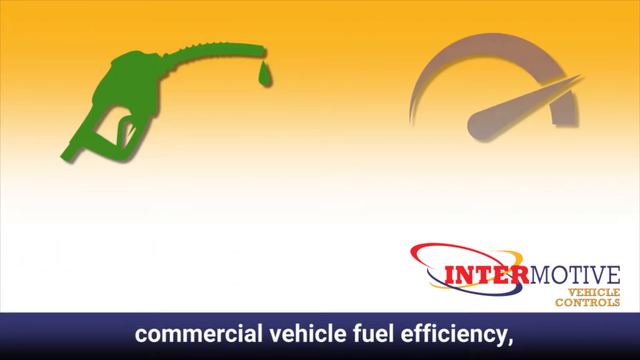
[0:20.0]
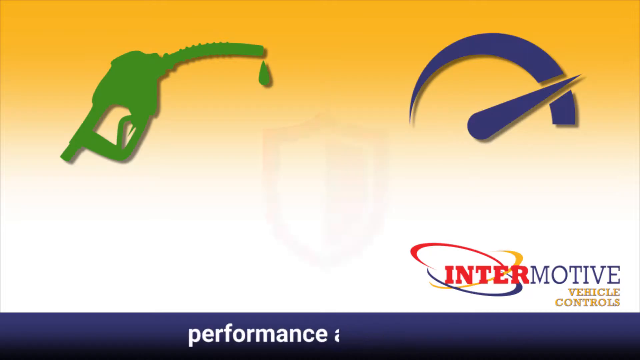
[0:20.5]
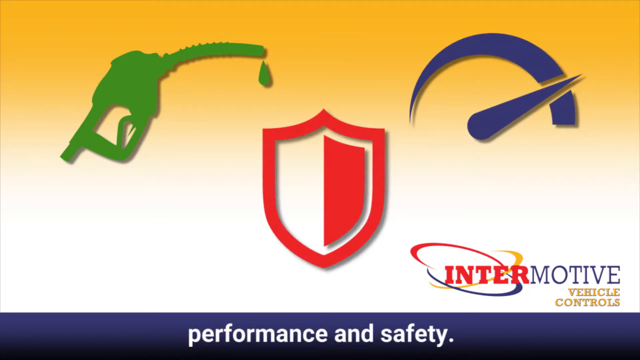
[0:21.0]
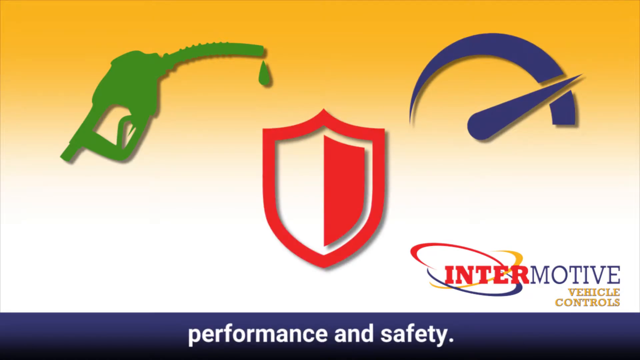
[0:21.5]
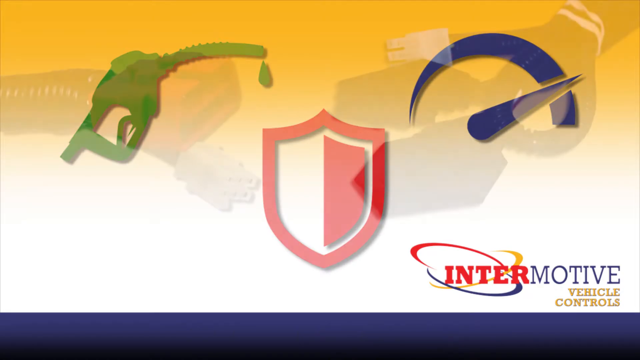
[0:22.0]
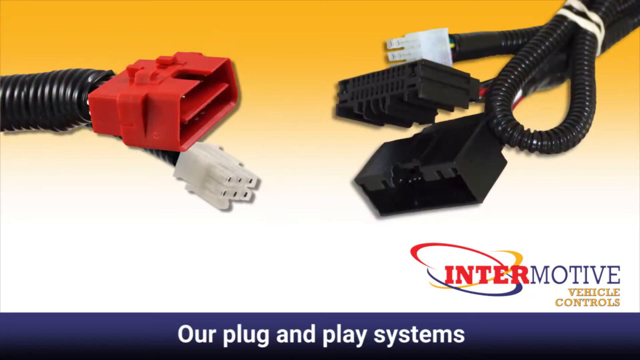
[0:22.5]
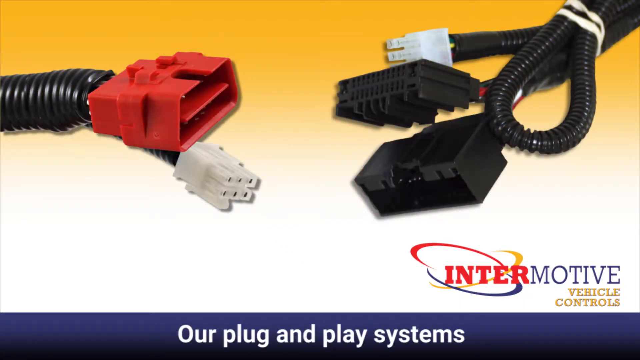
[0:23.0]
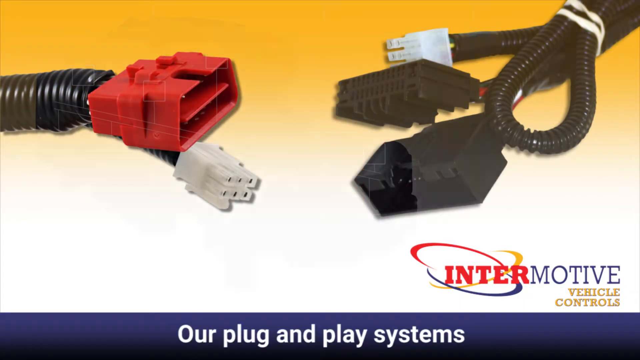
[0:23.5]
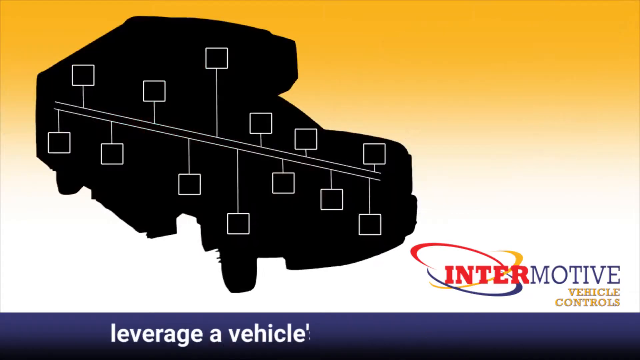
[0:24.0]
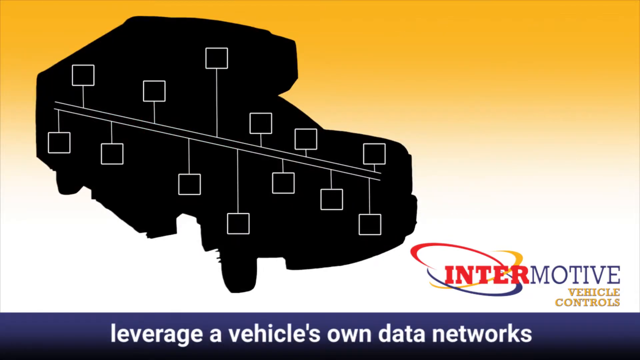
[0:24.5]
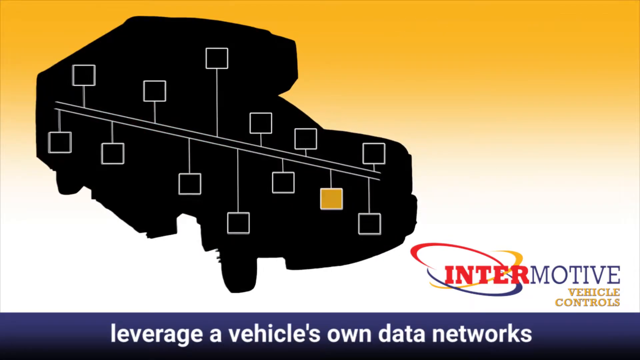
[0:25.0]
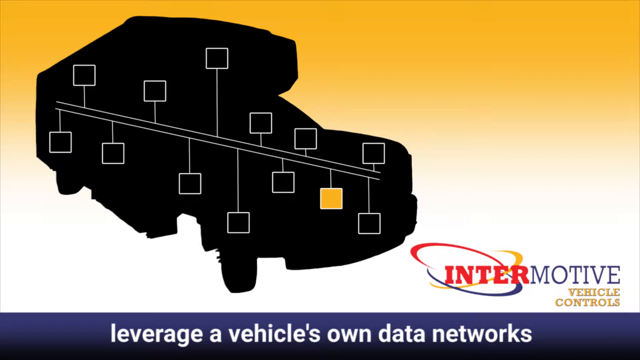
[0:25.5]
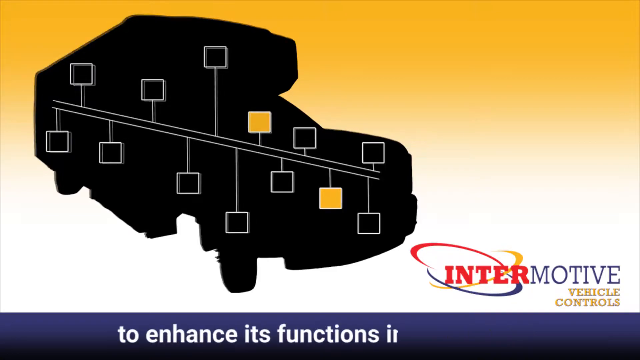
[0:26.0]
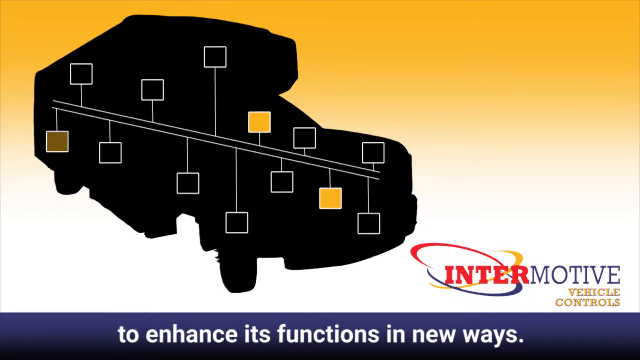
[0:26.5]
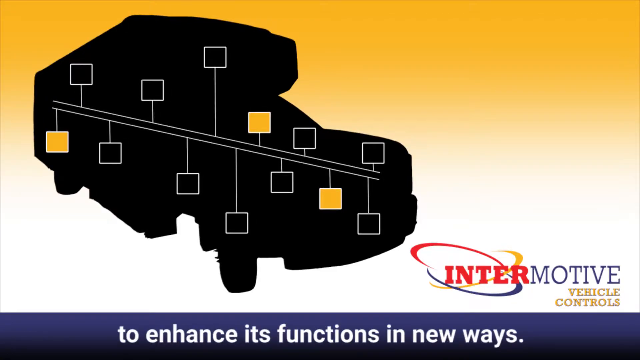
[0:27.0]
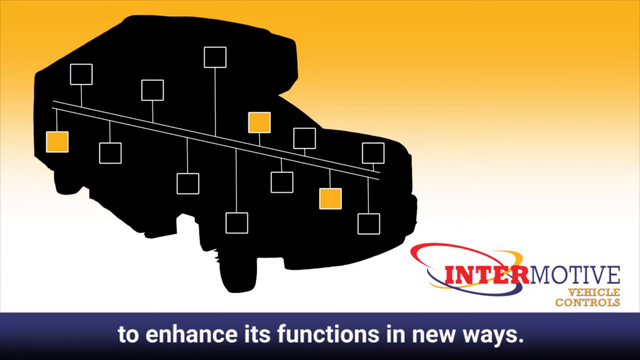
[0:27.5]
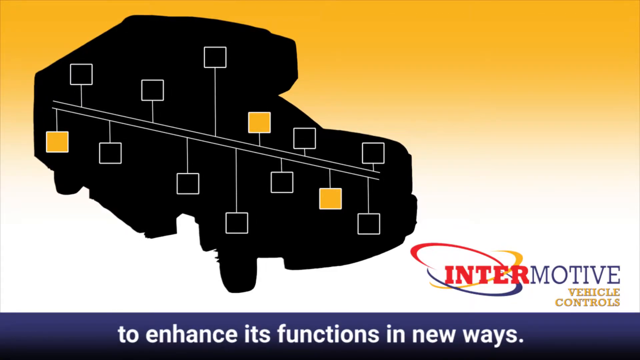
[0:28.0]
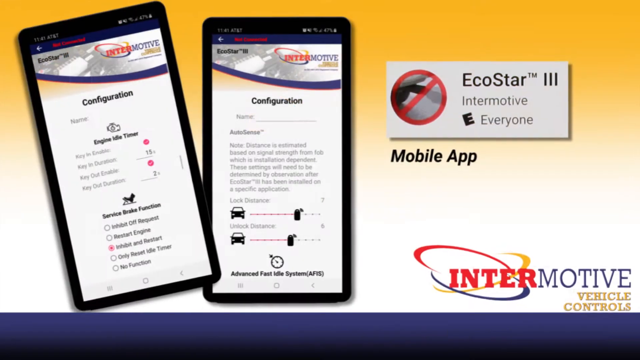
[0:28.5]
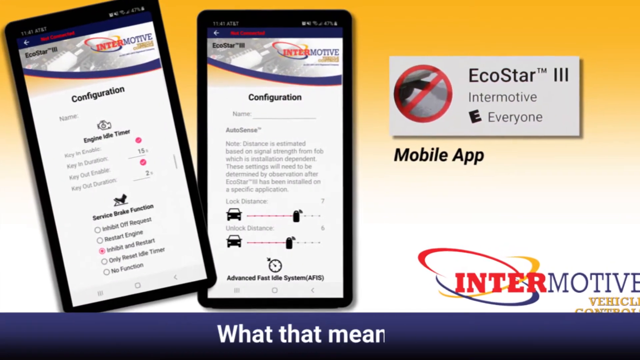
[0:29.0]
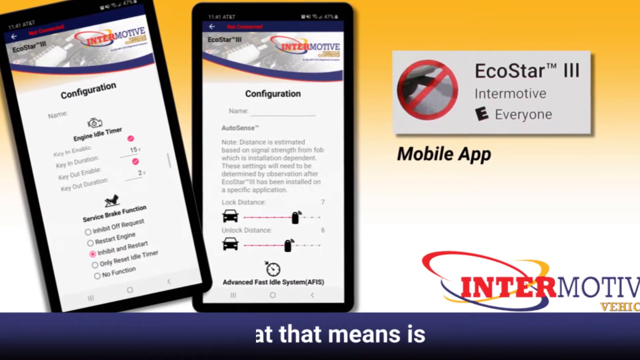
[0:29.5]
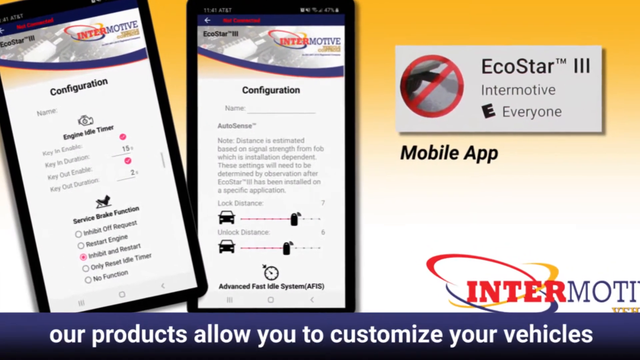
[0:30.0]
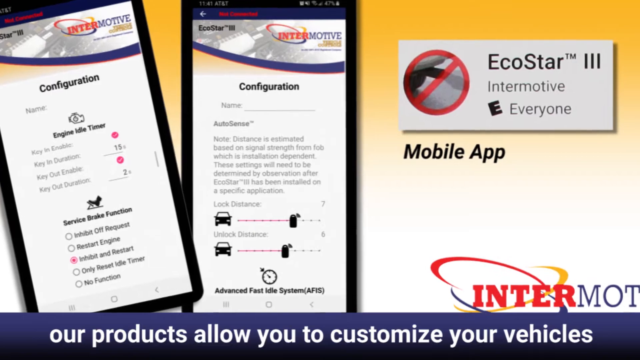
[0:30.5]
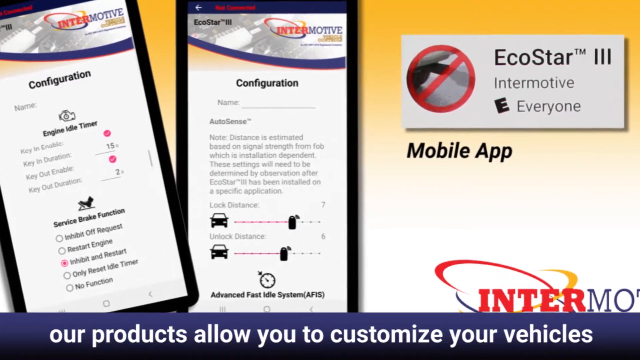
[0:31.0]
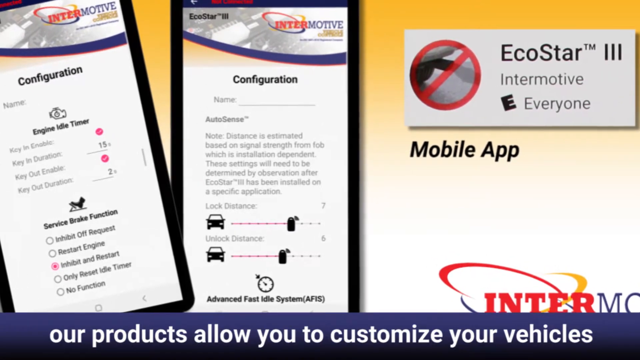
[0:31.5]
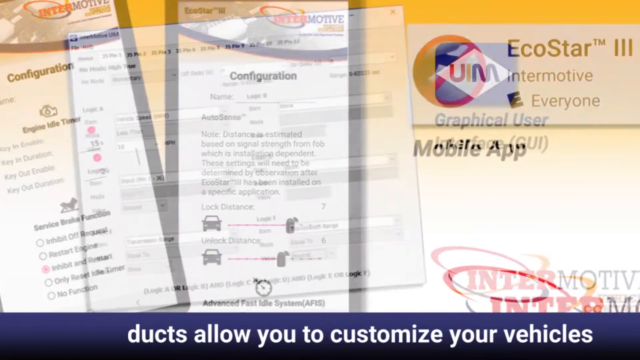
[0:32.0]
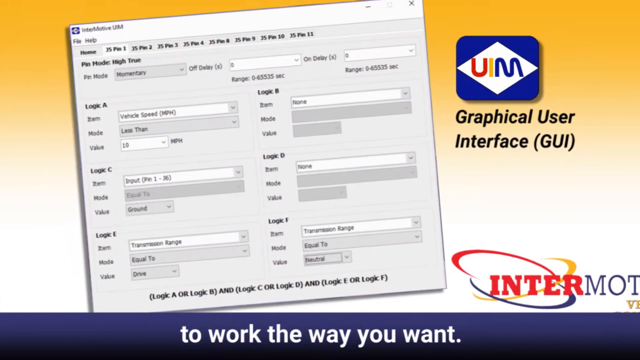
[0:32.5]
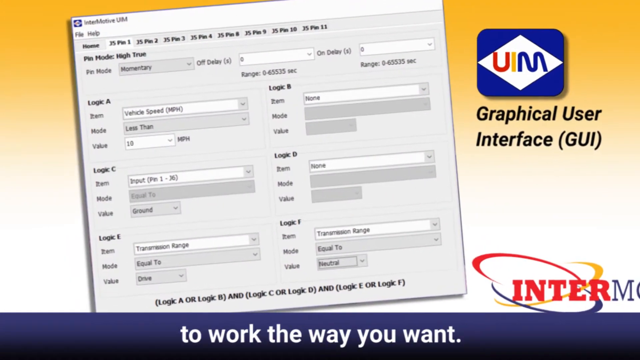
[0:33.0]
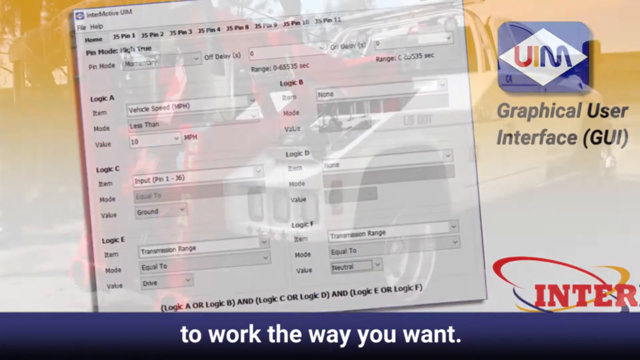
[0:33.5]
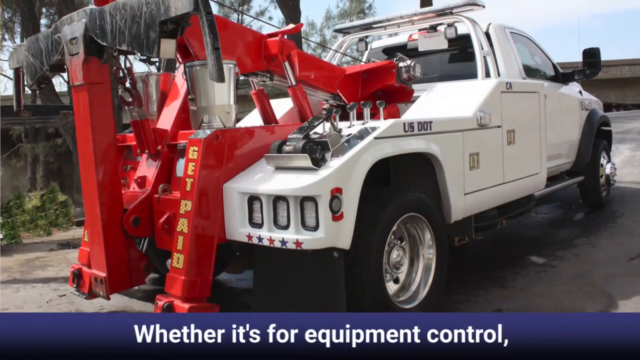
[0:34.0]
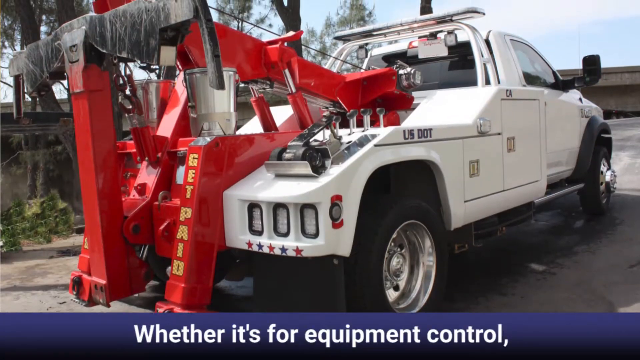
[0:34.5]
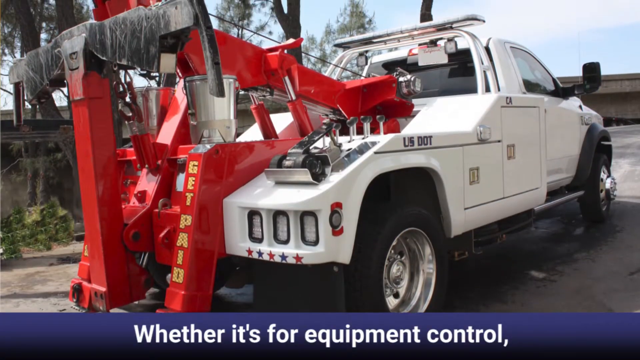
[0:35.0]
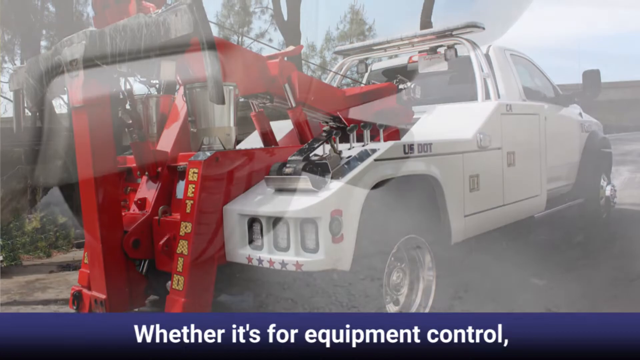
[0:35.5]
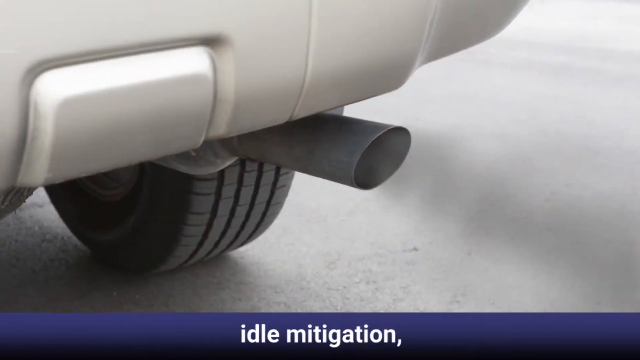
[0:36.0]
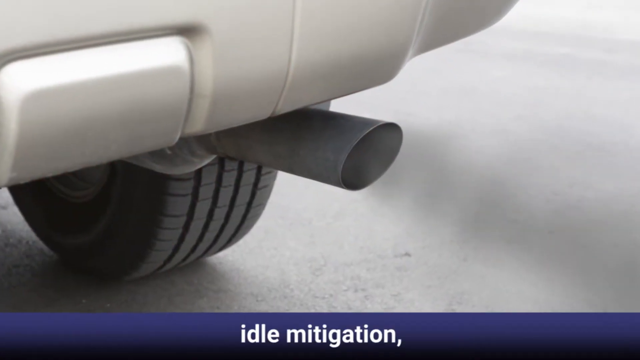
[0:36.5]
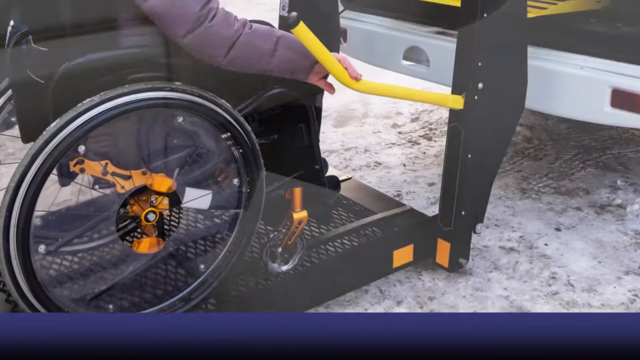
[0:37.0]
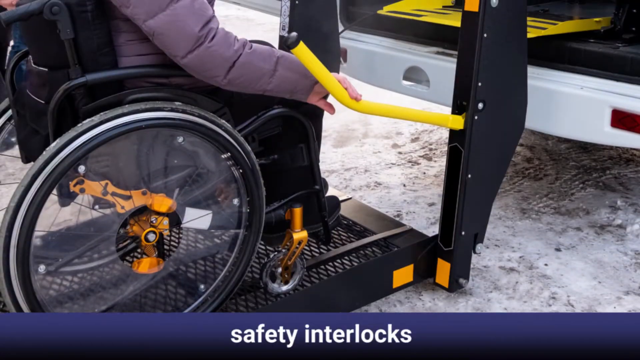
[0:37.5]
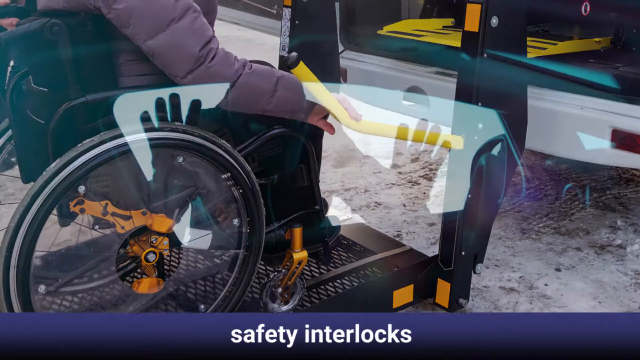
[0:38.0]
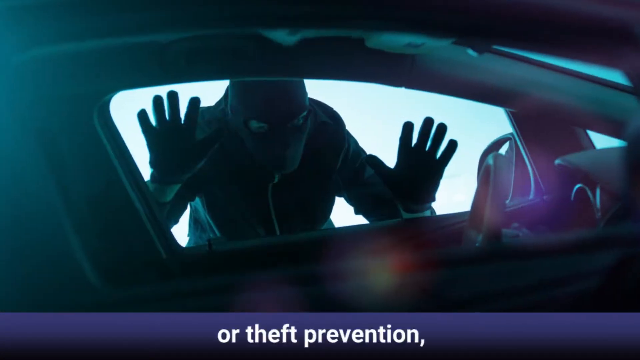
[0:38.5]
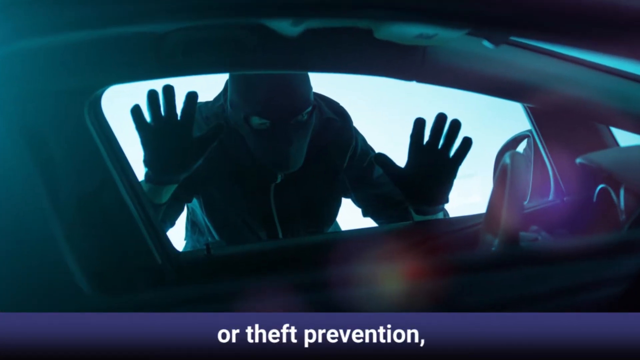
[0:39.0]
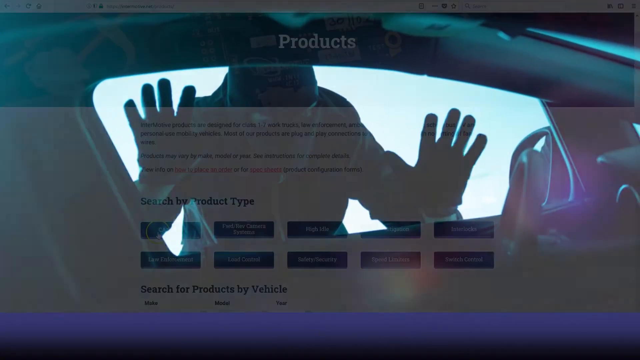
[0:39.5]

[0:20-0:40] The yellow background remains, with white text still running across the bottom and a blue border; just above that in the right corner is "Intermotive vehicle controls." In the top left is a green image of the end of a fuel pump, the part where the nozzle is pulled. In the top right is something like a gauge that is blue. In the center is an outline of a red shield whose left half inside is white and right half is red. Two electrical cables come in from the left; one connects to a big red box that can be plugged into, and one to a small white one. In the top right is another one with a rubber band around it, a small white one and two big black ones. Next is an outline of a bus with two white lines coming from the left, going down, then branching off. Above it are six small boxes and below it seven small boxes; they start lighting up yellow, and three of them light up. Then two phones on the left side display a website. In the top right, a white rectangle reads "Echo Star Intermotive for everyone," and below that black text reads "mobile app," while white text keeps scrolling across the bottom. The view slowly zooms in and cuts to another website, which is blurry and hard to read. Next the view is behind a tow truck; the big towing part is red and the truck is white, with blue sky and trees around. A close-up shows exhaust blowing out black smoke. Then there is a wheelchair on a ramp, and somebody dressed like a robber looking inside a car.